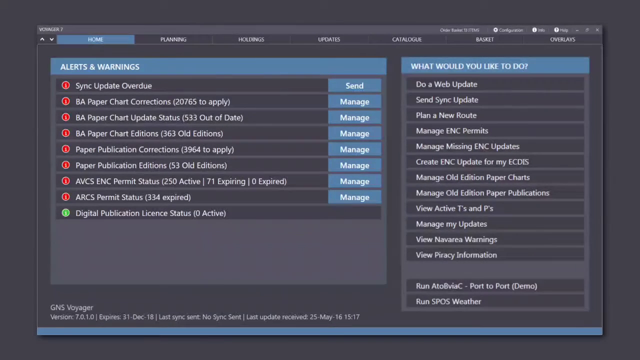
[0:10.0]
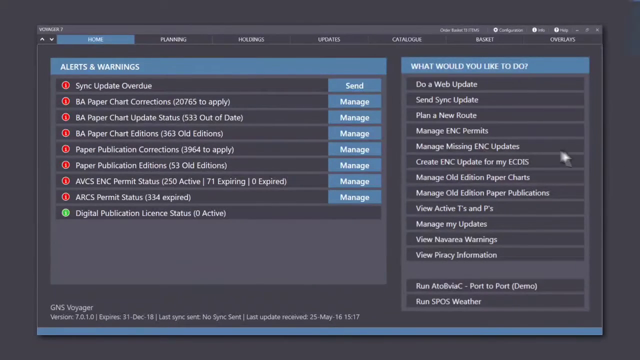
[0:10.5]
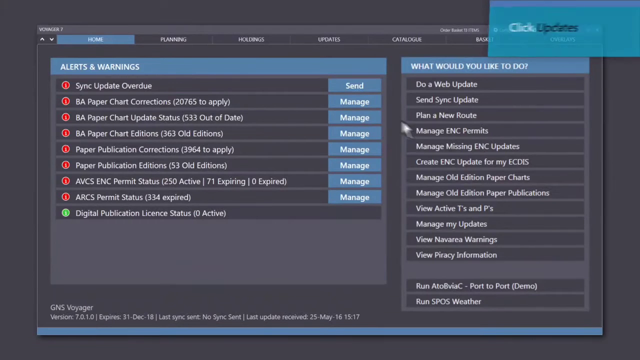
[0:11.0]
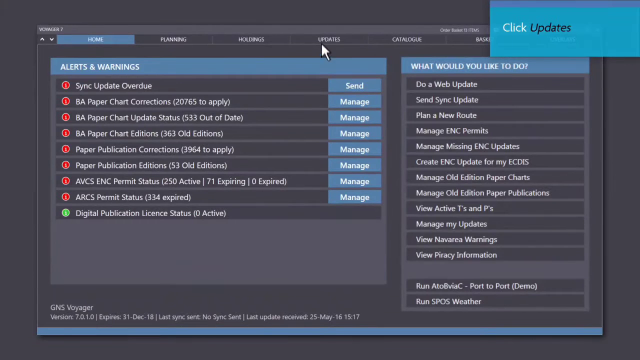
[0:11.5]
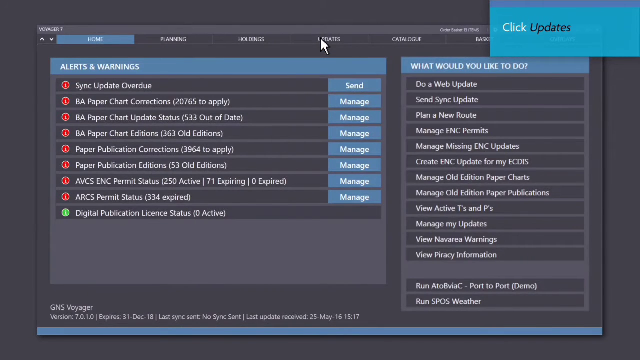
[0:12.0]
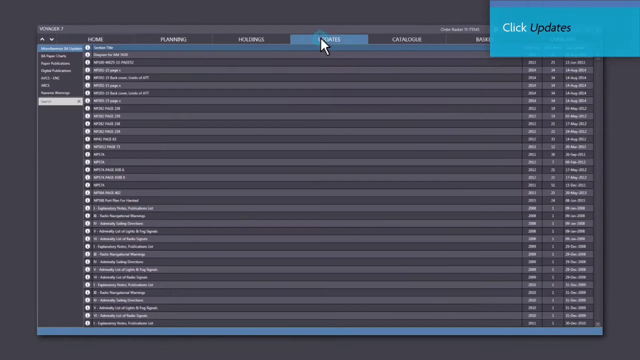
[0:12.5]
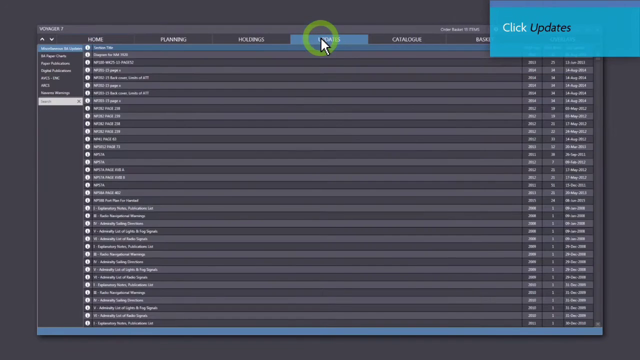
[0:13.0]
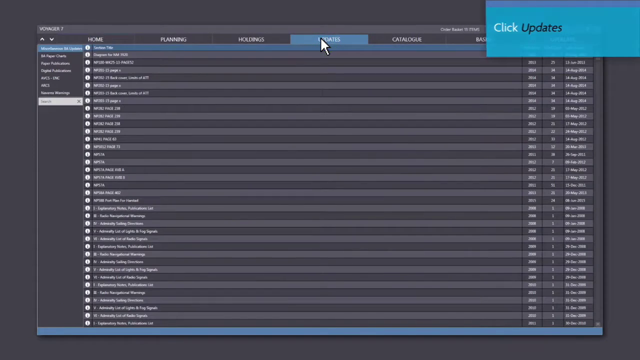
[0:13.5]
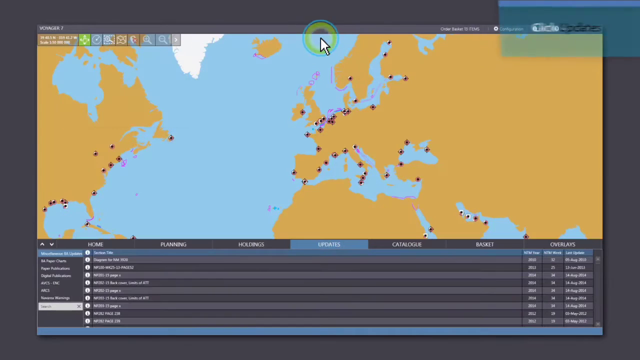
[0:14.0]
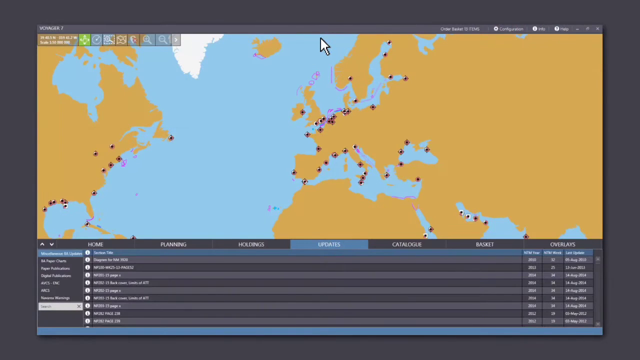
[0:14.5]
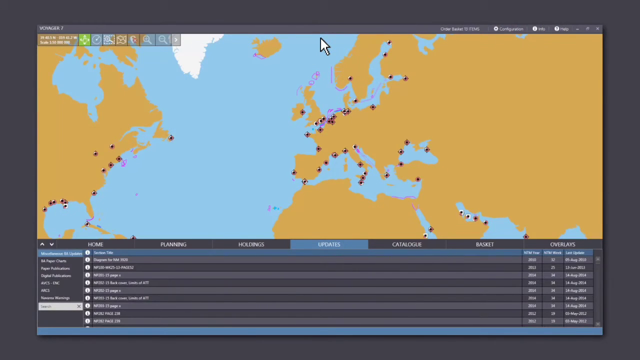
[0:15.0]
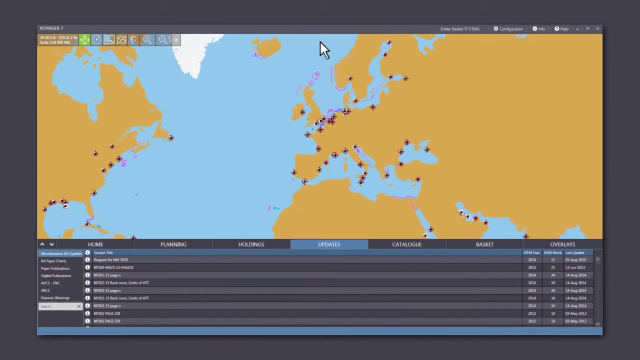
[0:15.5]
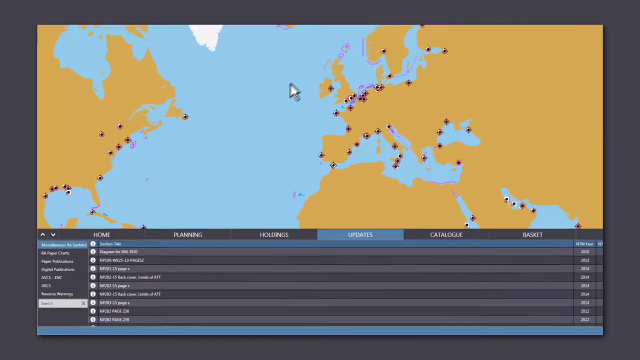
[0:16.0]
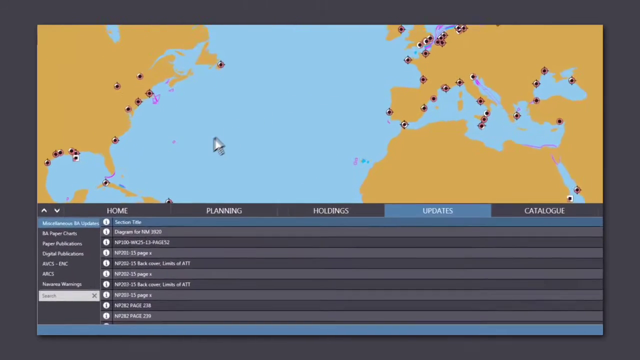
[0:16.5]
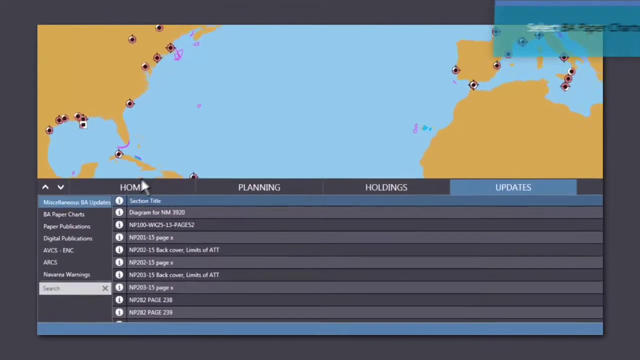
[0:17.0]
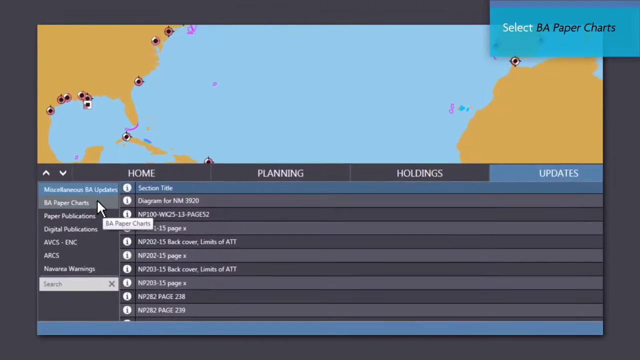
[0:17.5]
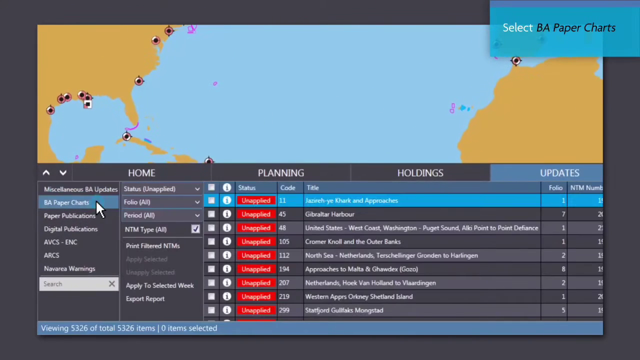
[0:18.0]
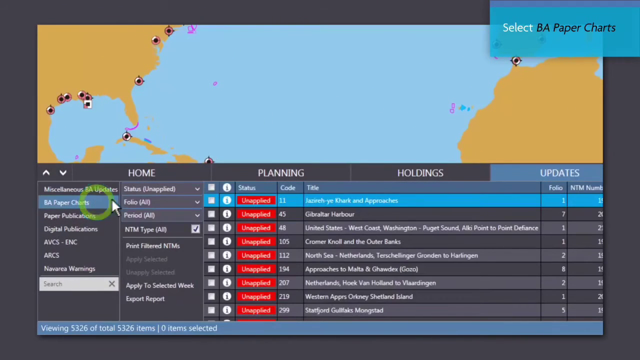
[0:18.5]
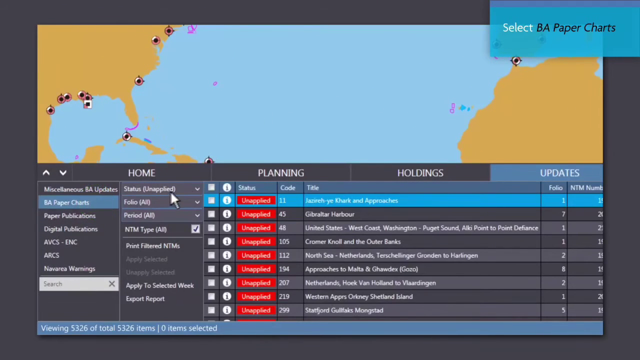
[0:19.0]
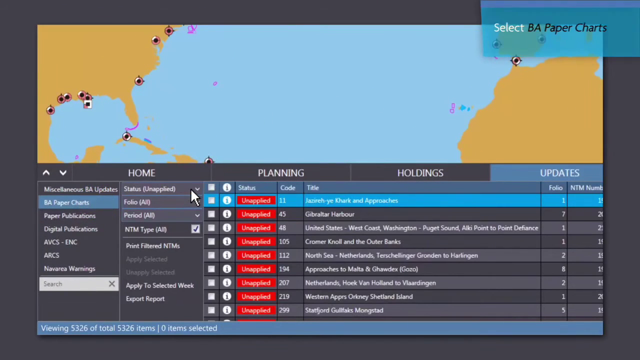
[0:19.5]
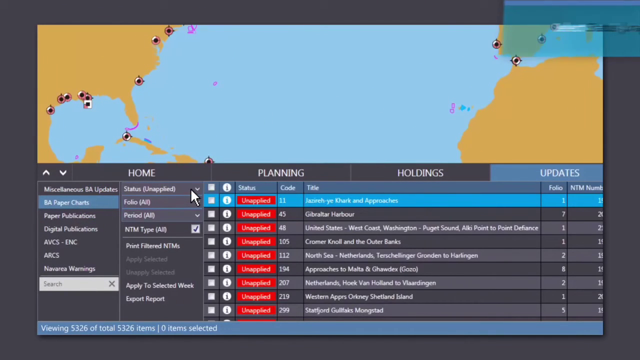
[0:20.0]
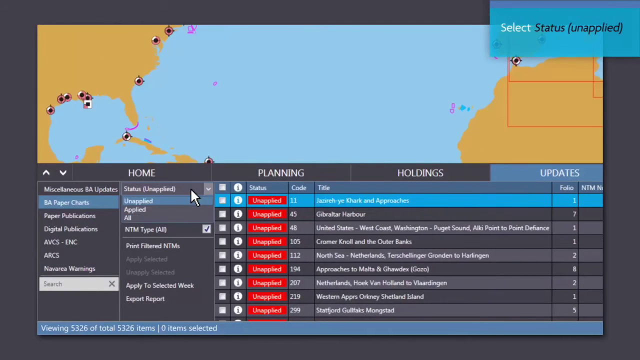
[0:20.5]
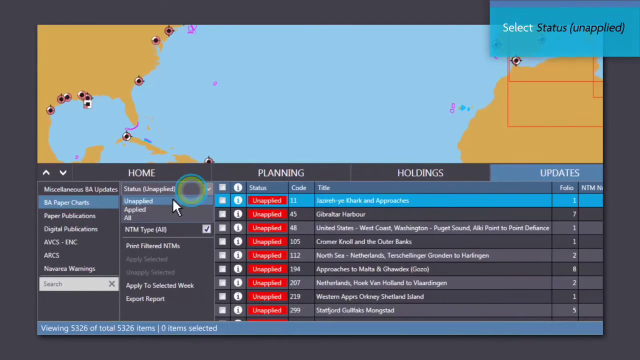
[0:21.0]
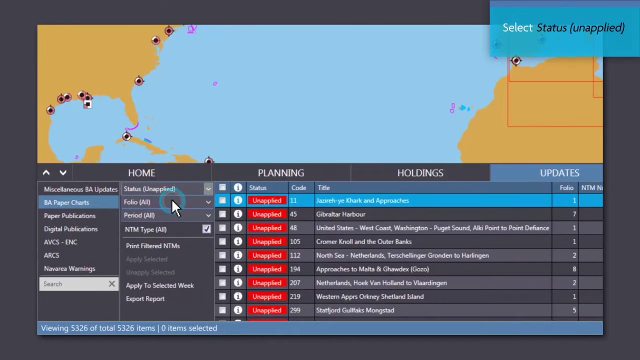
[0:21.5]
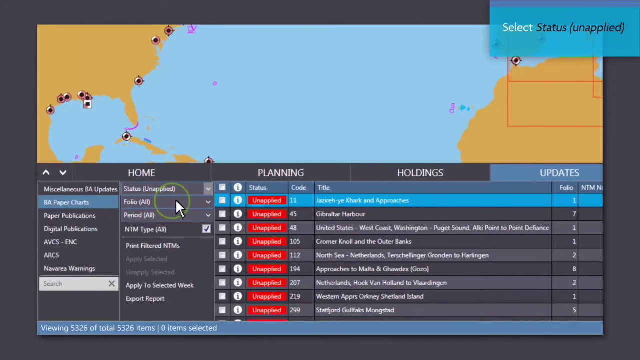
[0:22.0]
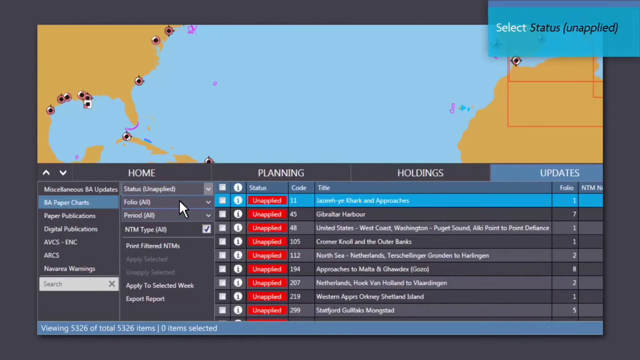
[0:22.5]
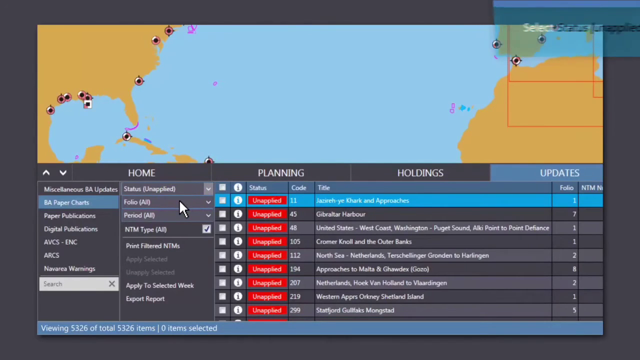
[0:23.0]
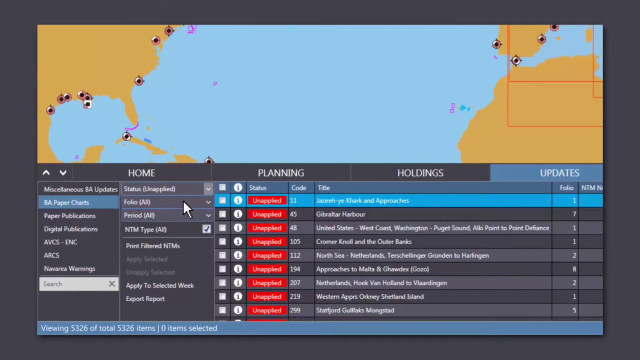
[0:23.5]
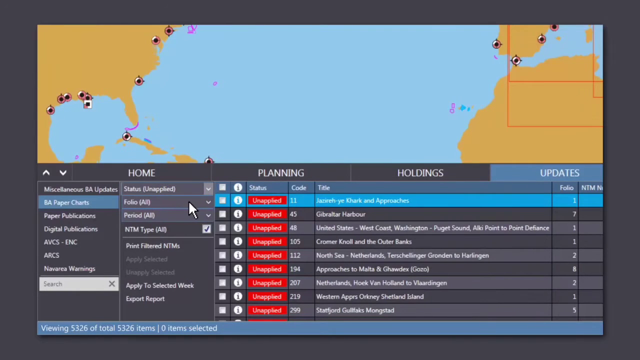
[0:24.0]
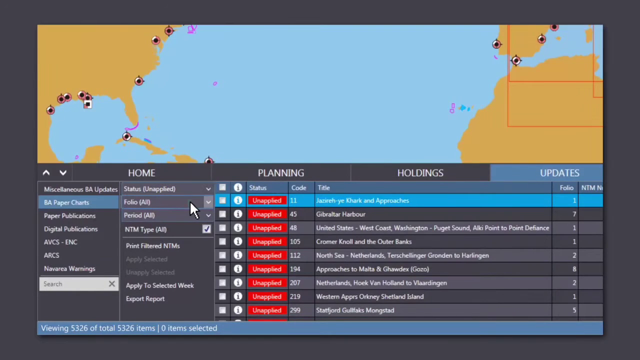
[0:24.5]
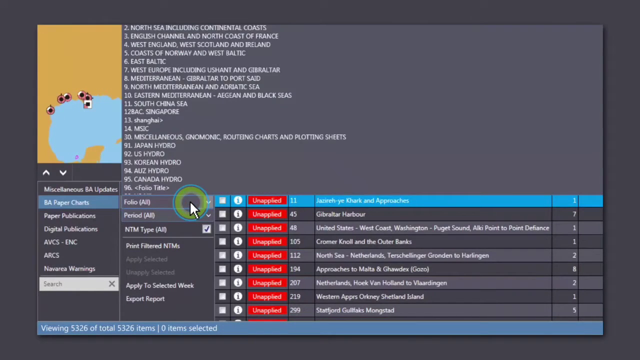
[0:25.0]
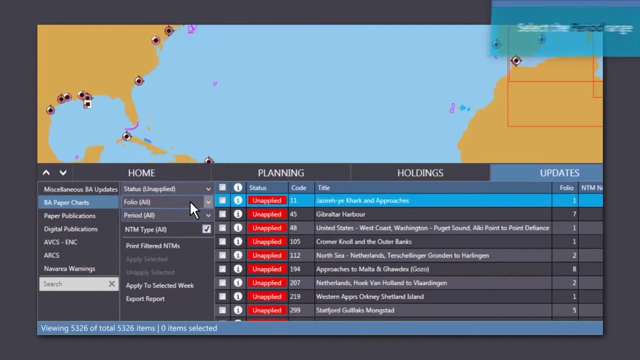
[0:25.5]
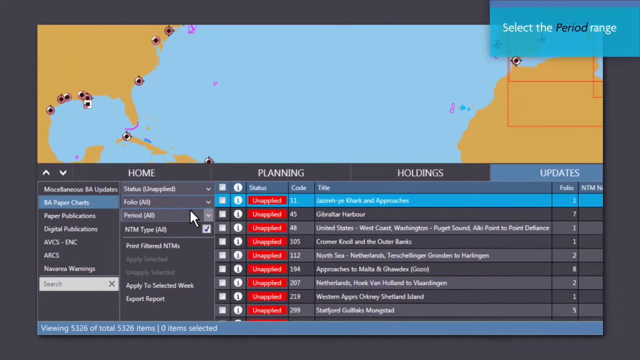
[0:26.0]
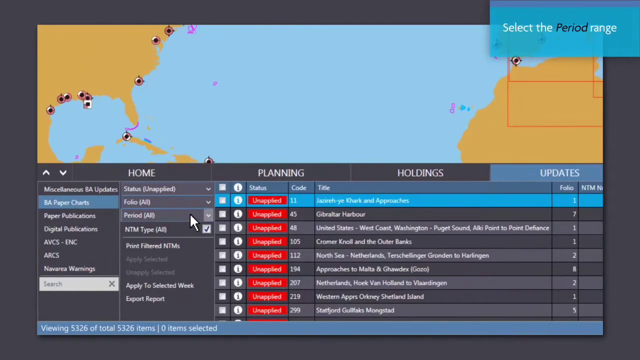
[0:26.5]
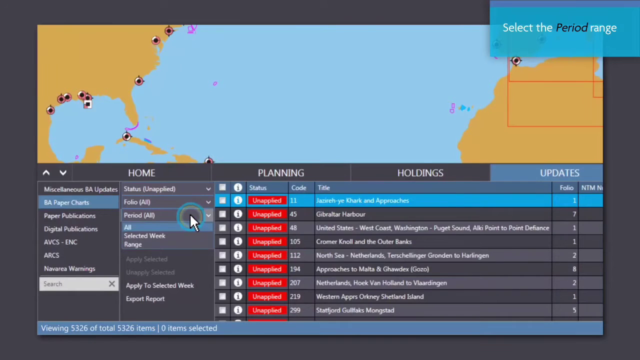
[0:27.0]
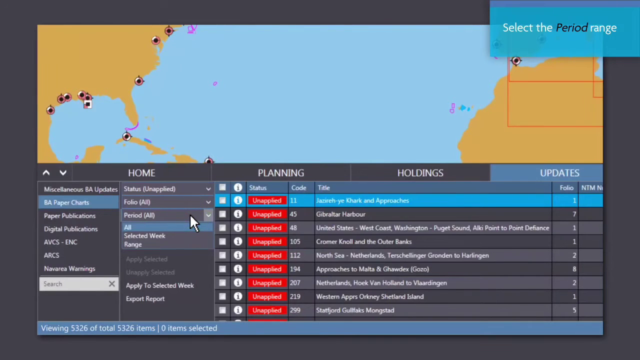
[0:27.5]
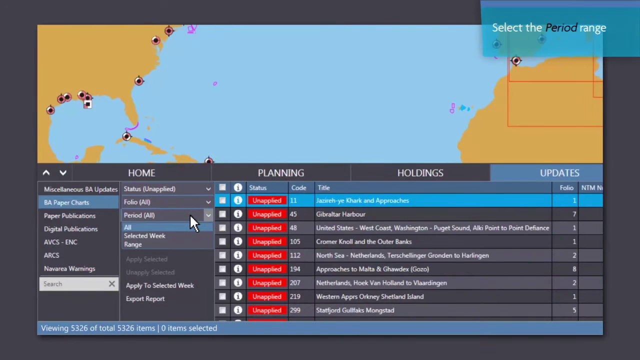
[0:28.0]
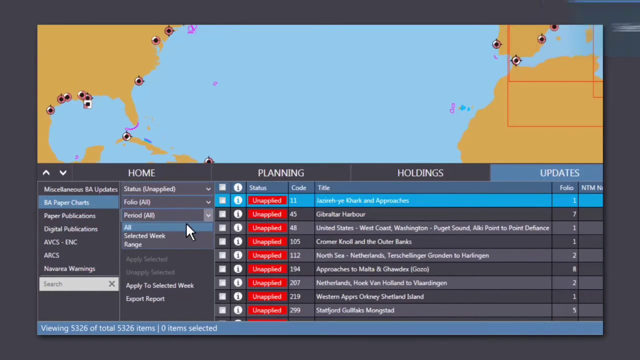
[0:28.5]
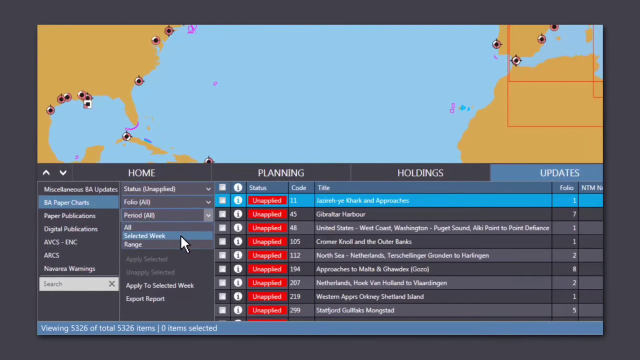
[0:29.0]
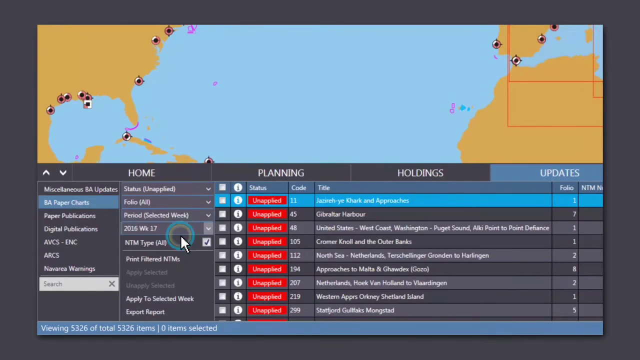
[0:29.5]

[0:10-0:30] The black screen with all the headings, including alerts and warnings, is shown, and Home is clicked. Text says "click Updates in the right-hand corner." Once that is clicked, a map with many different items comes up on the screen, on the Updates section, with "Voyager 7" in the top left-hand corner. BA Paper Charts is then clicked, and text says "select status unapplied." An arrow moves to different items, showing how to move between options. The view returns to the home screen, where Check Updates is clicked, and goes to the map again, showing how to check things on it. The period range can be checked as well as the updates, using a dropdown menu.